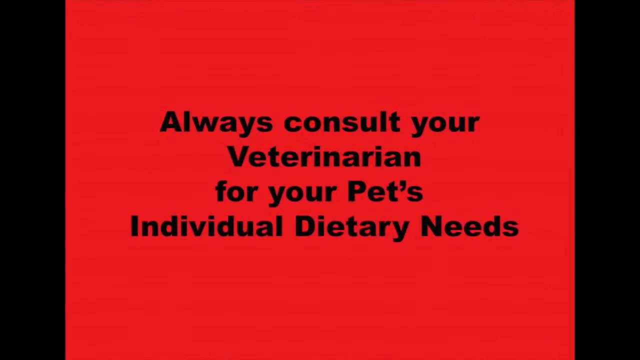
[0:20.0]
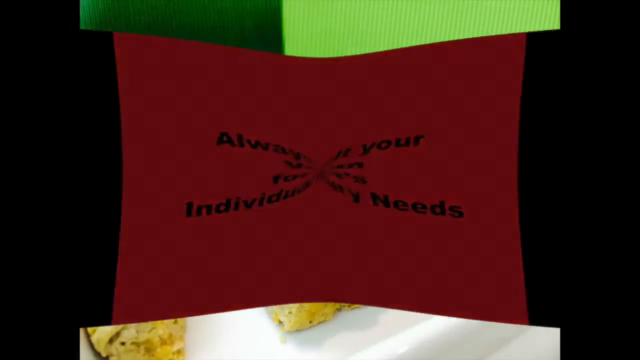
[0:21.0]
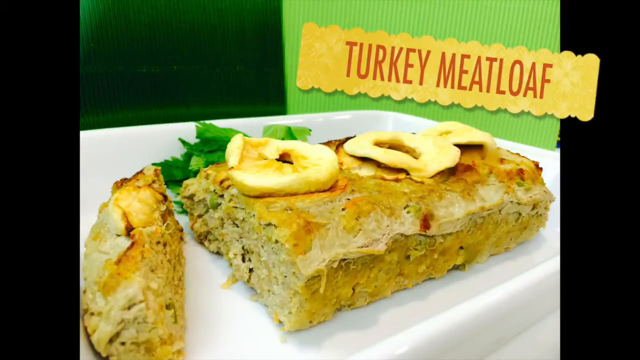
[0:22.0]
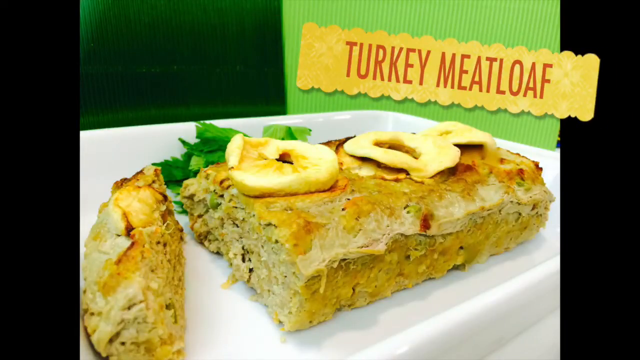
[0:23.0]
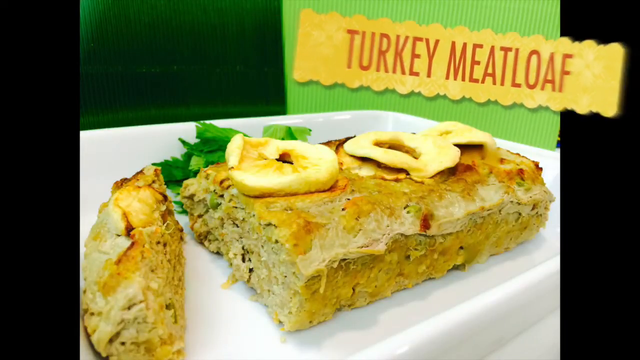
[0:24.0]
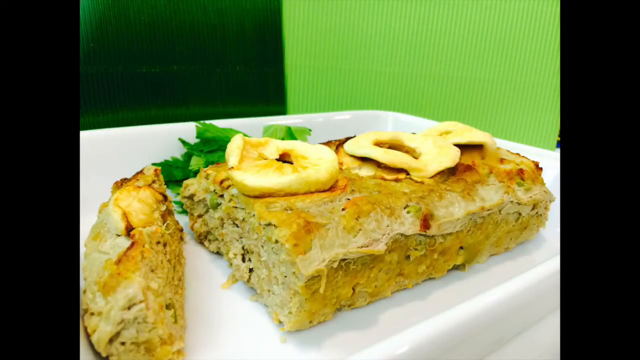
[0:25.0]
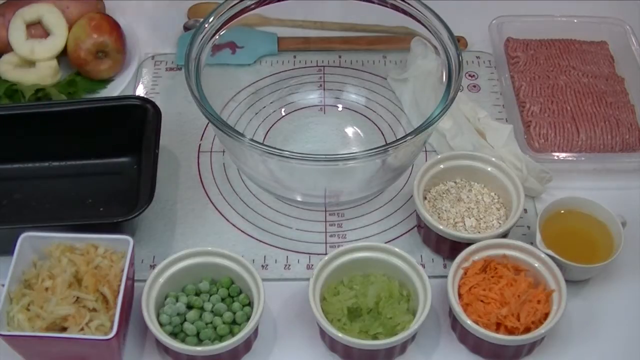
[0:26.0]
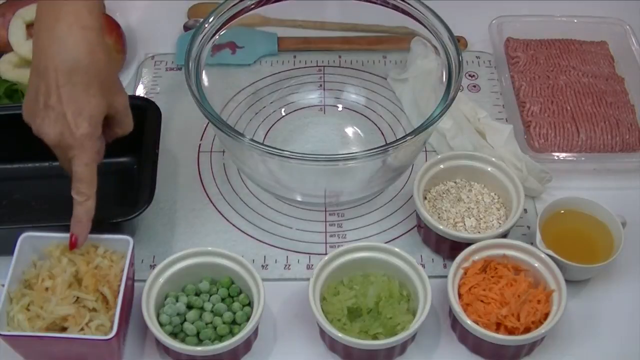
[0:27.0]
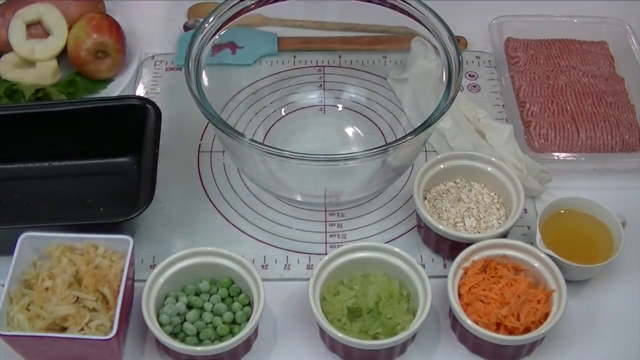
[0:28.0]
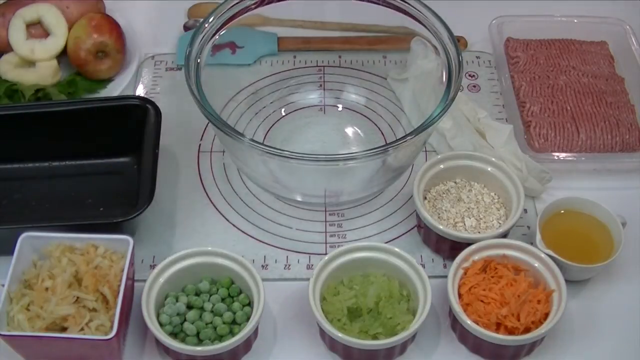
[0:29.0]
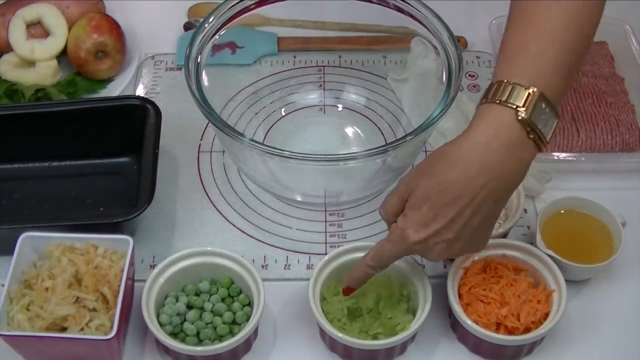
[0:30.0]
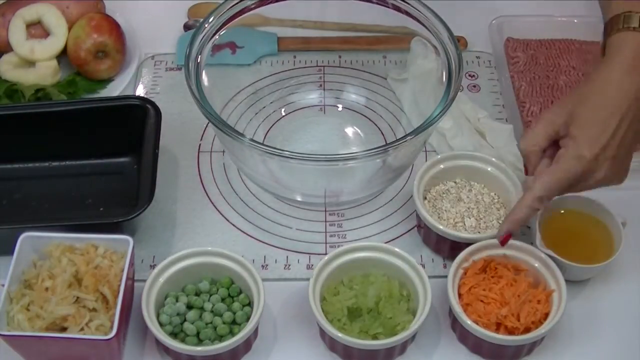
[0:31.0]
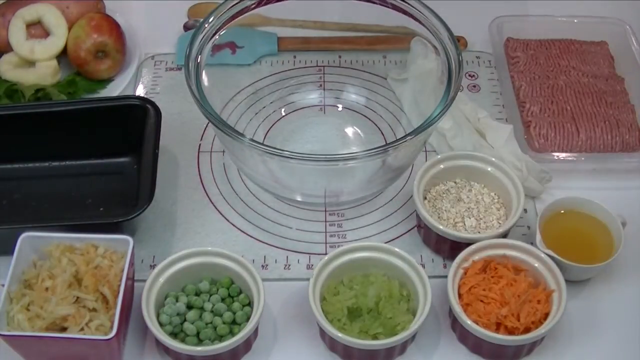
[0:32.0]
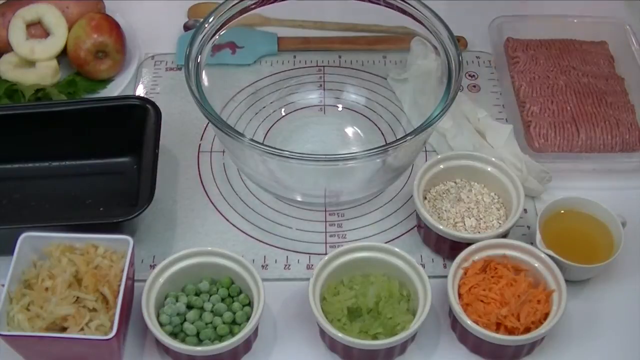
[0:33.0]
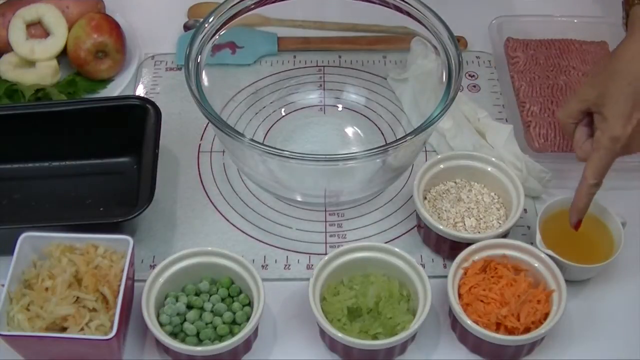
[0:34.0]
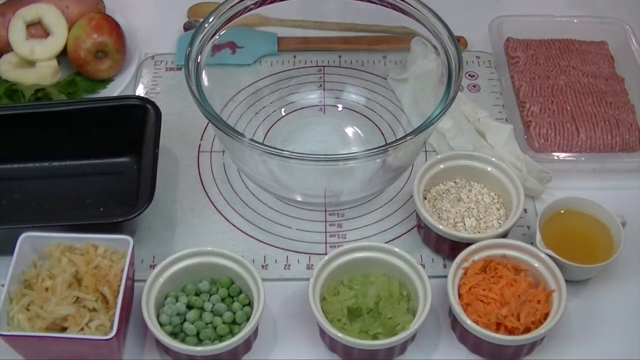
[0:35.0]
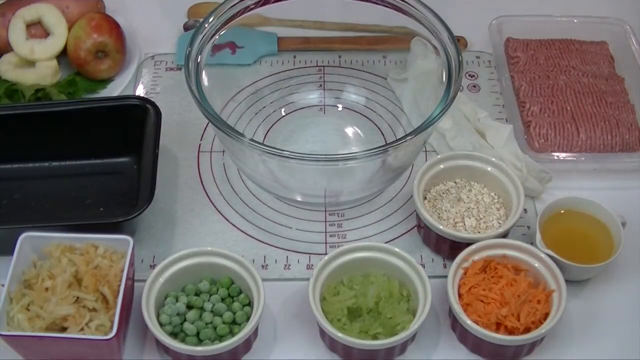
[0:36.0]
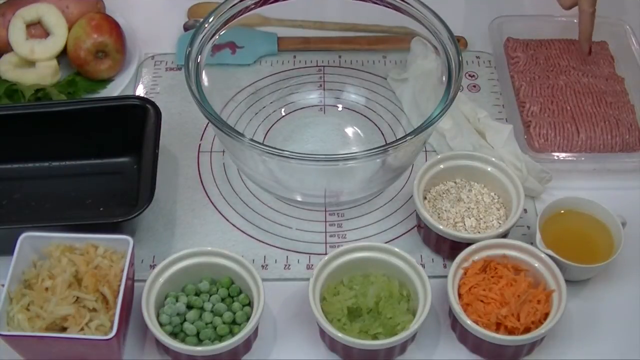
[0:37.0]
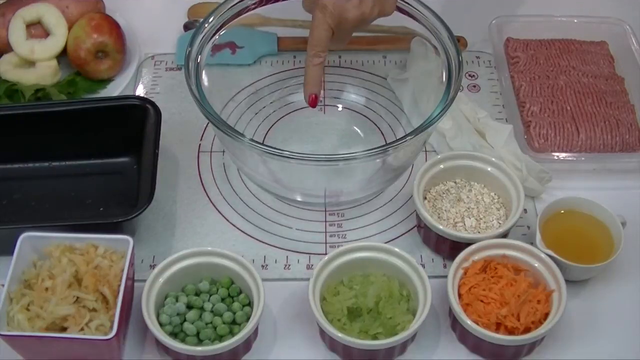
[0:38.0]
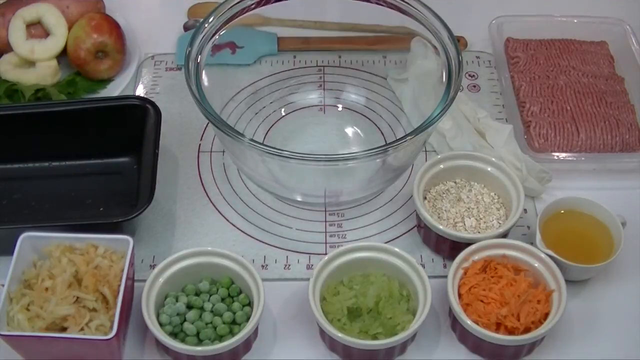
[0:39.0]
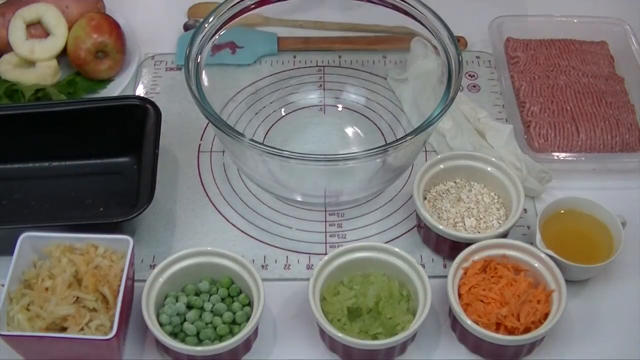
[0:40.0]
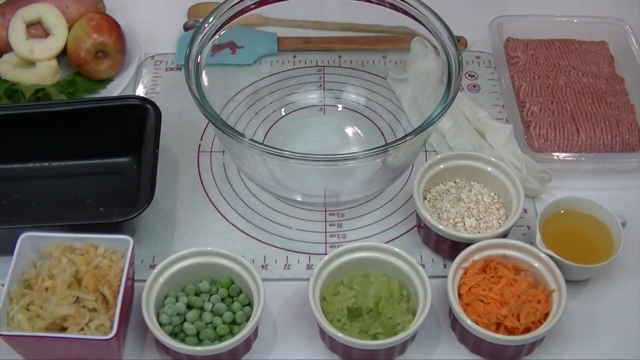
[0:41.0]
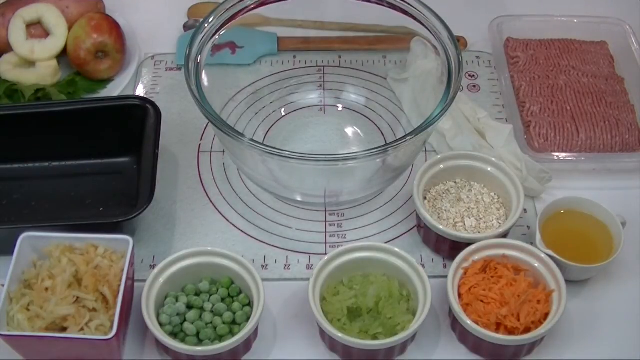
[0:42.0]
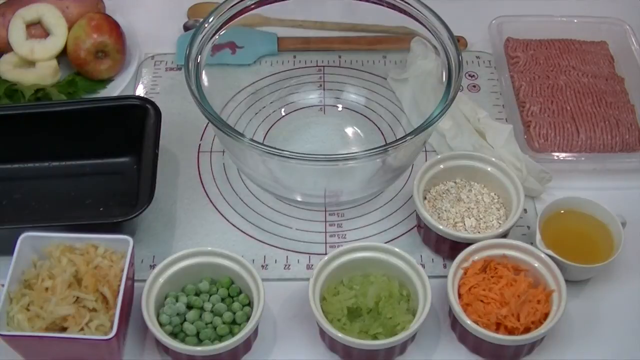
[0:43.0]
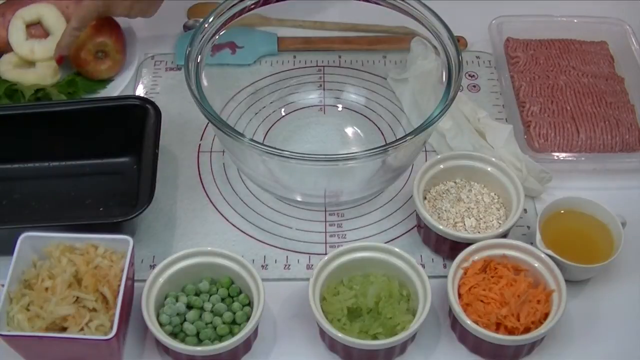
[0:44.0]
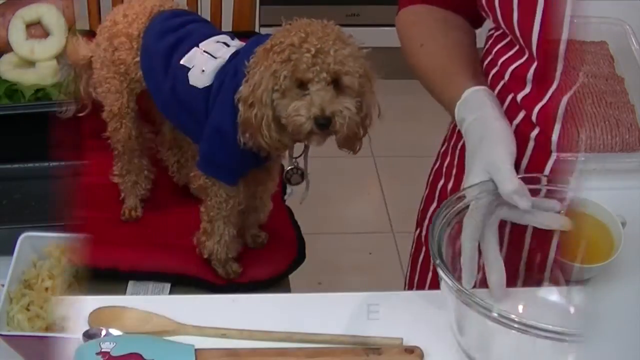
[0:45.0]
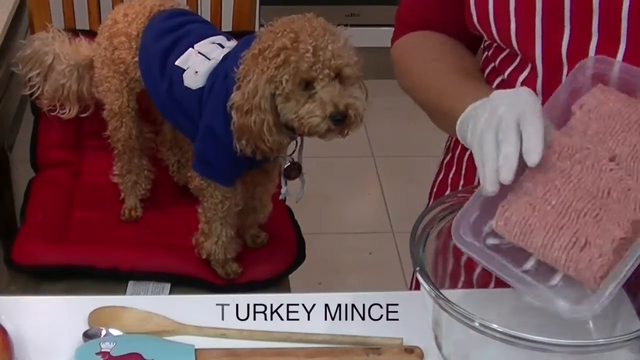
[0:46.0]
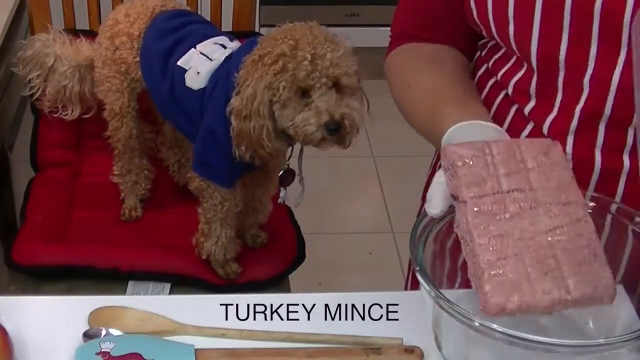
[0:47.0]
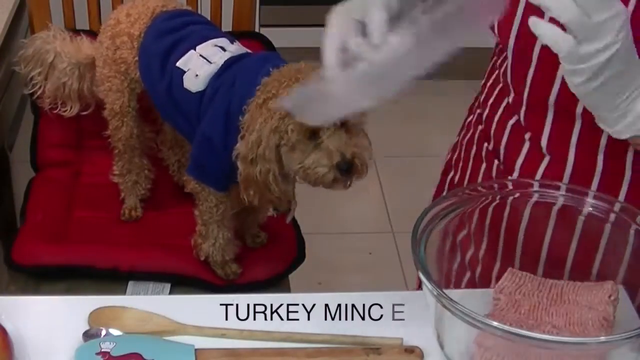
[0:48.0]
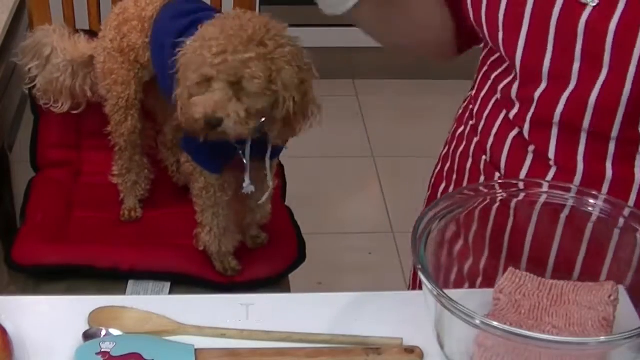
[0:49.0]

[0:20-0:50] A red background with black writing says "always consult your veterinarian for your pet's individual dietary needs". The scene changes to a photograph of turkey meatloaf on a white plate. Next, someone has a glass bowl in front of them, surrounded by various ingredients that look to be diced carrots, lettuce, peas and others, including mince in the top right-hand corner. Only the person's hand is visible as it points to each ingredient one by one and then to the bowl. Under the bowl appears to be a mat with some sort of circles on it; in the background there look to be some pineapple slices and an apple, and behind the bowl there looks to be a wooden spoon and various other cutlery. The scene then changes to a dog in a blue sweater with white writing on it, sitting on a chair next to a woman who is handling a glass bowl on a table, and the words "turkey mince" come up underneath. The lady pours turkey mince from a plastic container into the glass bowl.